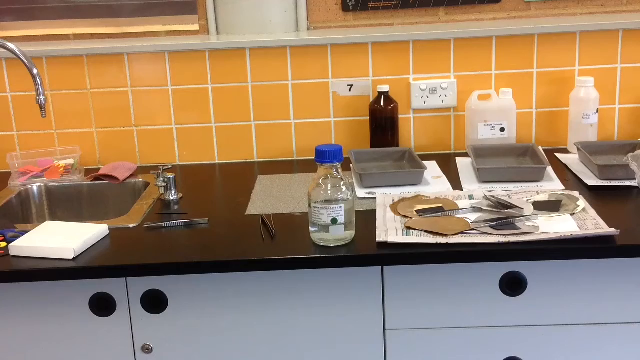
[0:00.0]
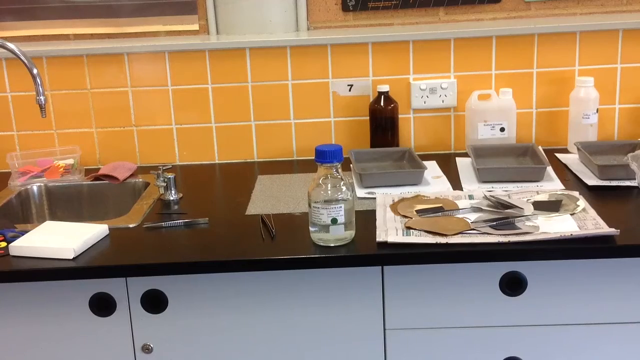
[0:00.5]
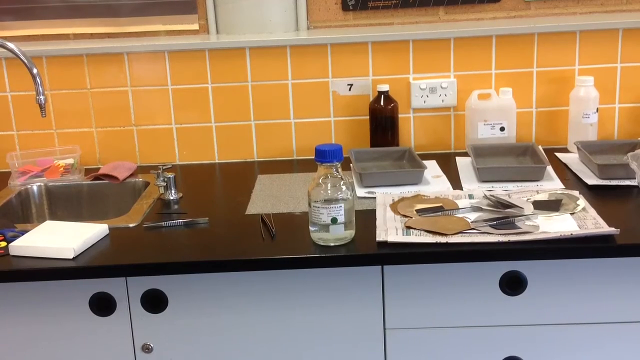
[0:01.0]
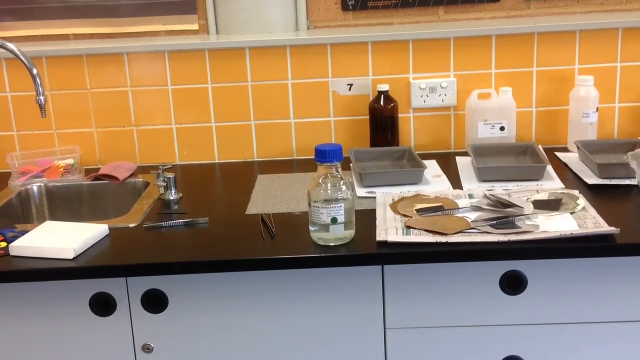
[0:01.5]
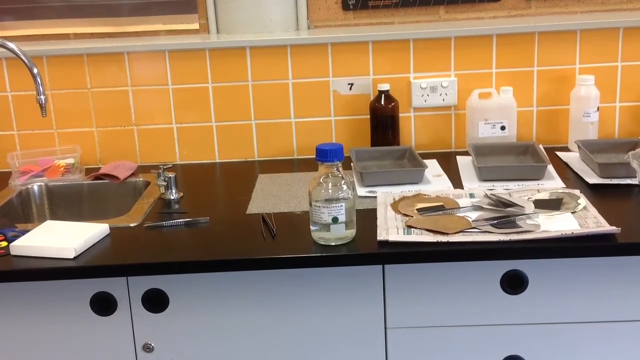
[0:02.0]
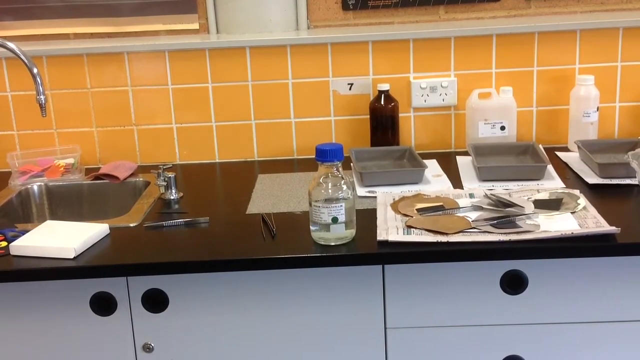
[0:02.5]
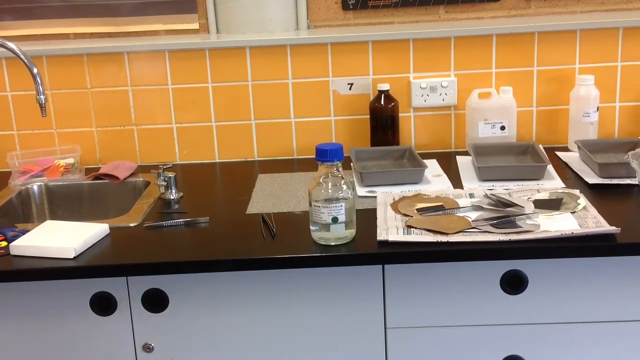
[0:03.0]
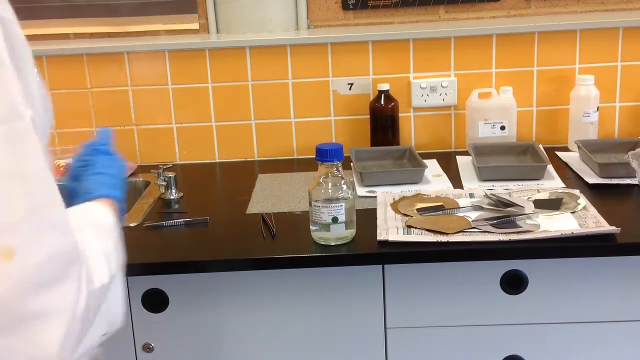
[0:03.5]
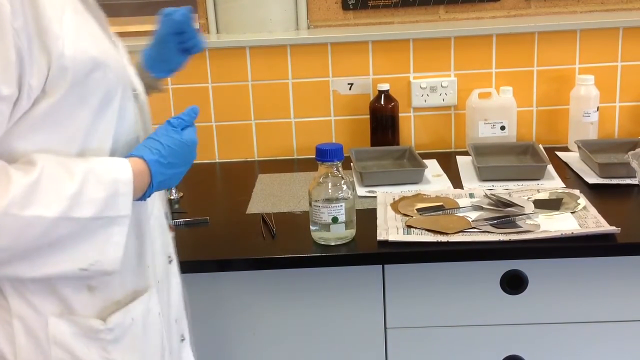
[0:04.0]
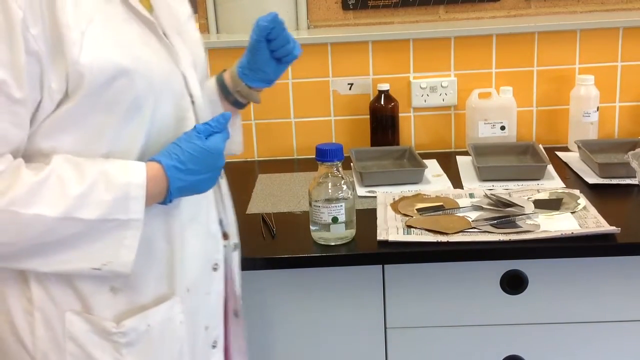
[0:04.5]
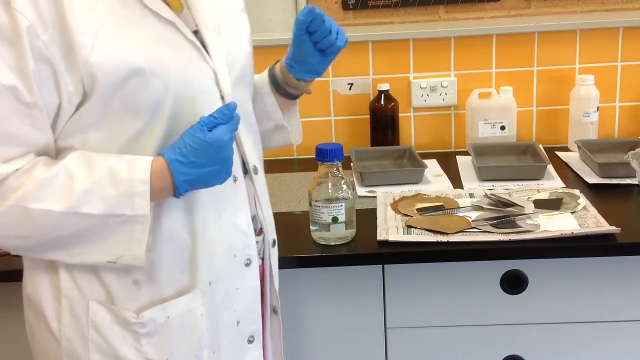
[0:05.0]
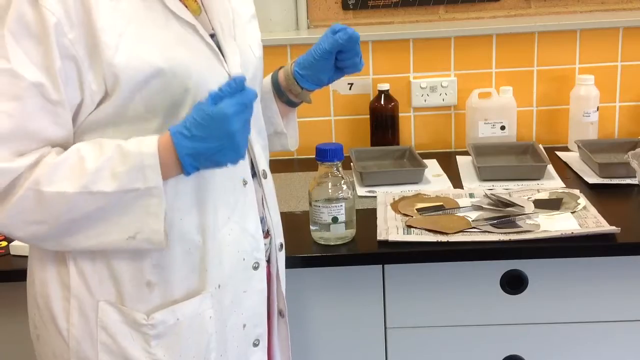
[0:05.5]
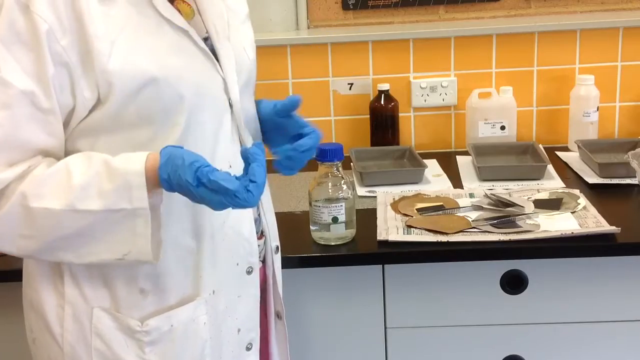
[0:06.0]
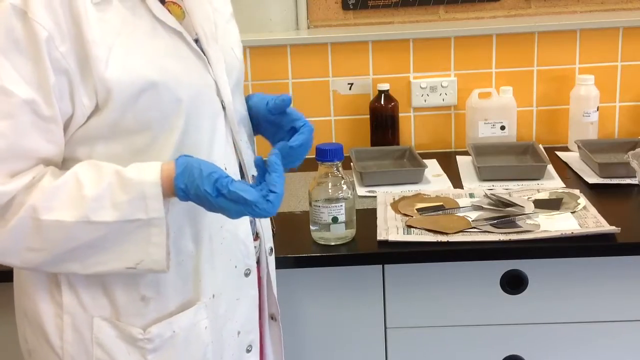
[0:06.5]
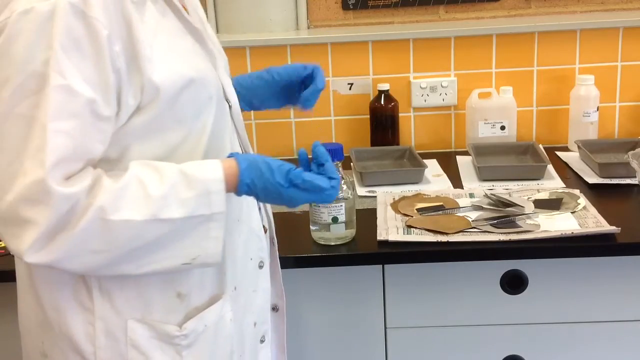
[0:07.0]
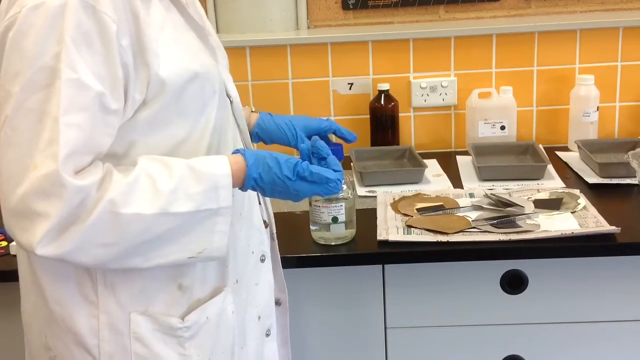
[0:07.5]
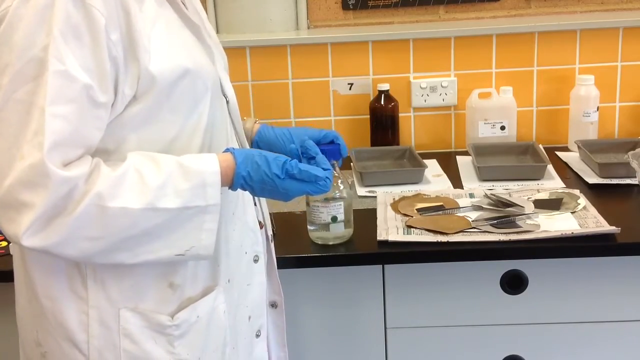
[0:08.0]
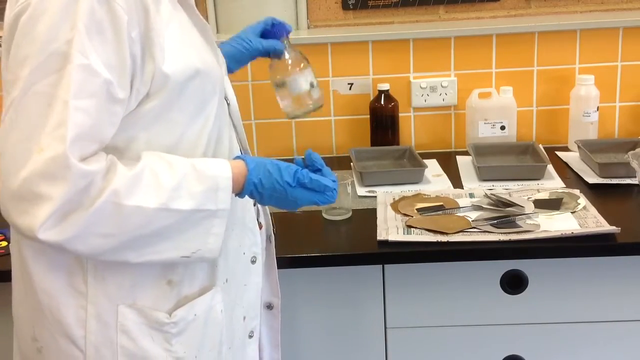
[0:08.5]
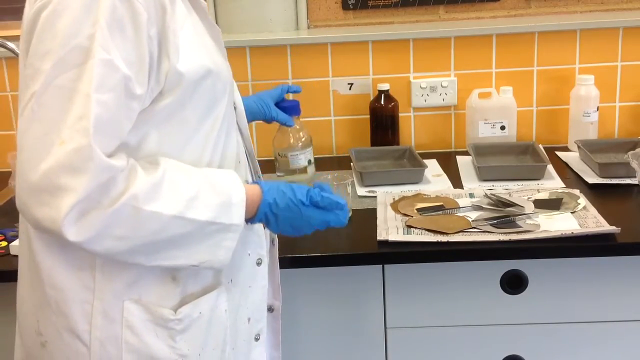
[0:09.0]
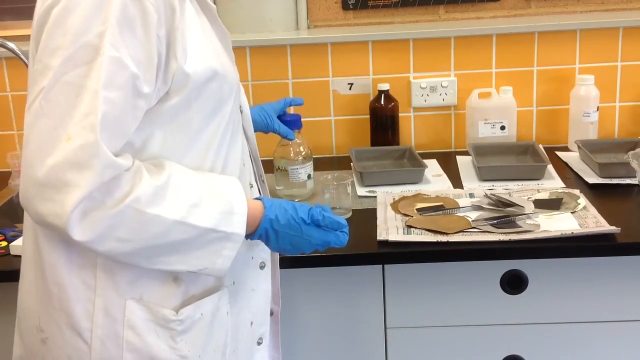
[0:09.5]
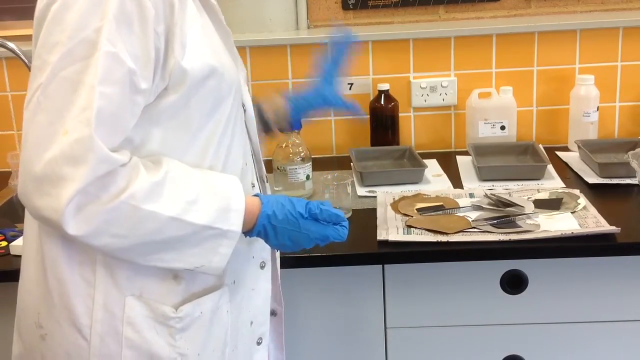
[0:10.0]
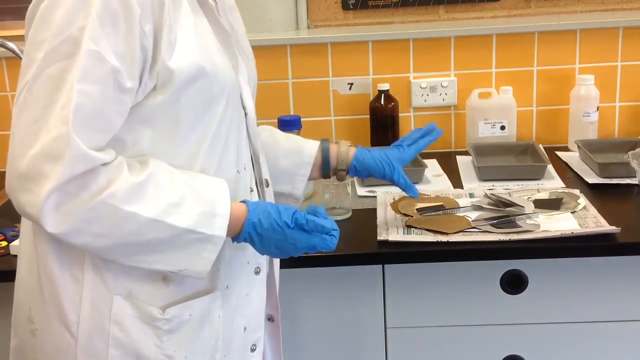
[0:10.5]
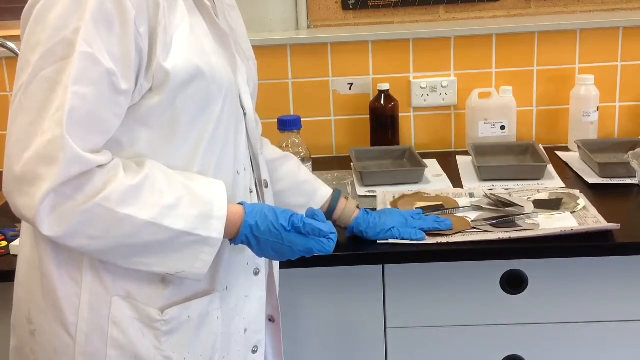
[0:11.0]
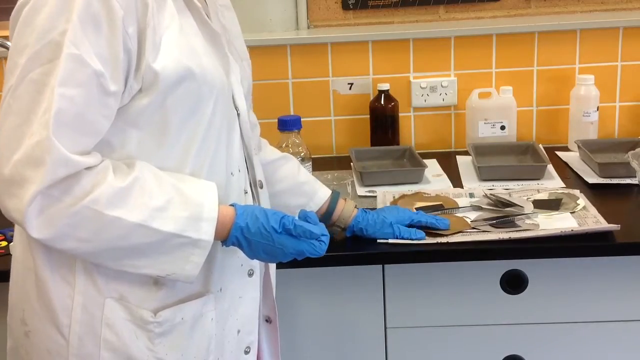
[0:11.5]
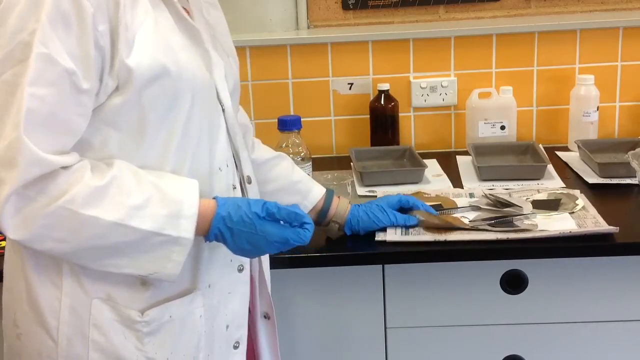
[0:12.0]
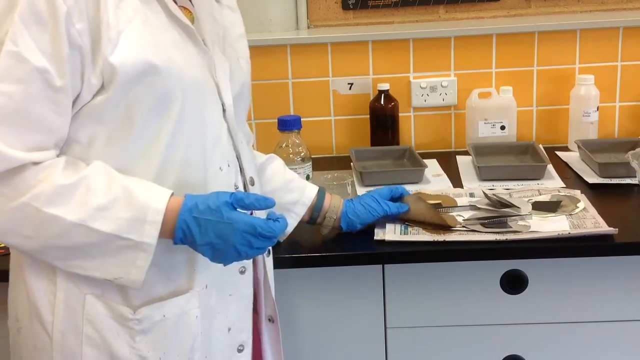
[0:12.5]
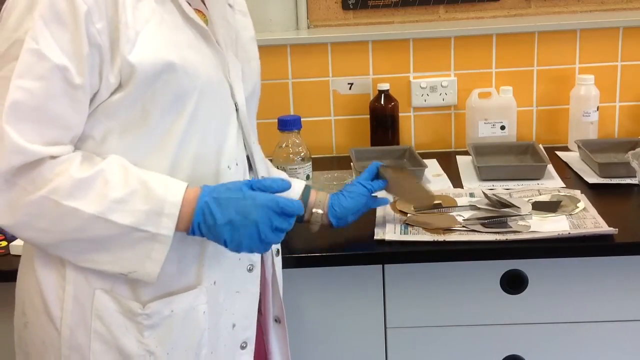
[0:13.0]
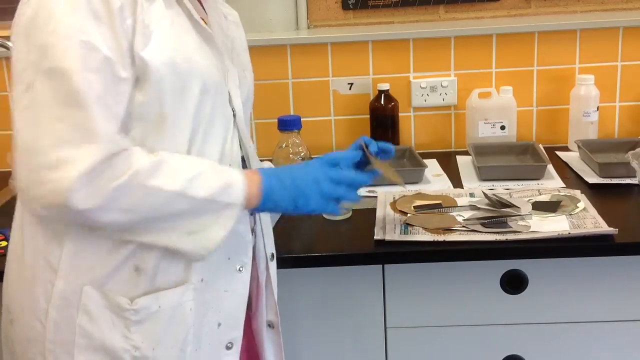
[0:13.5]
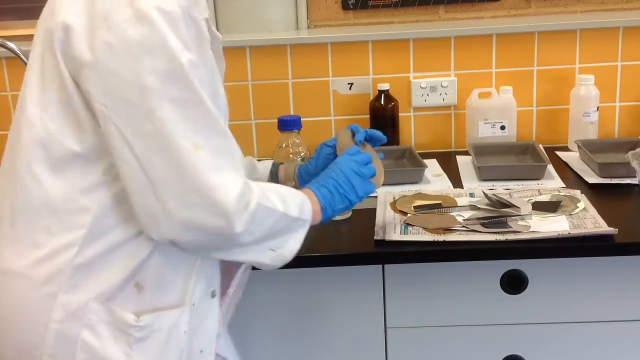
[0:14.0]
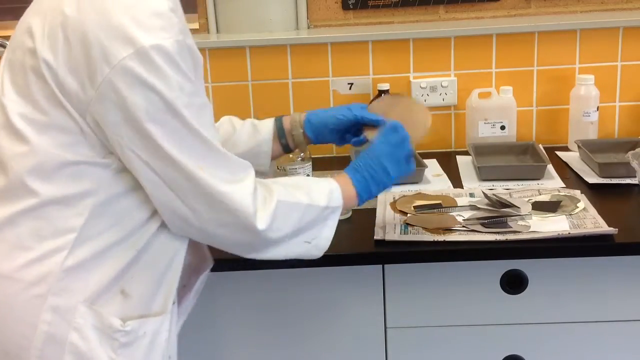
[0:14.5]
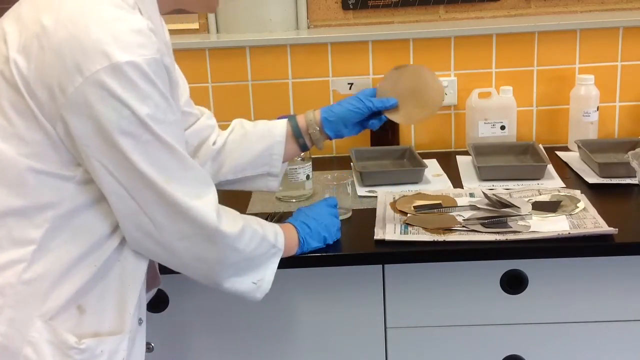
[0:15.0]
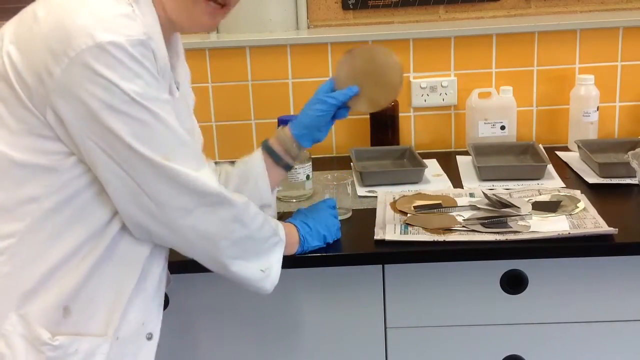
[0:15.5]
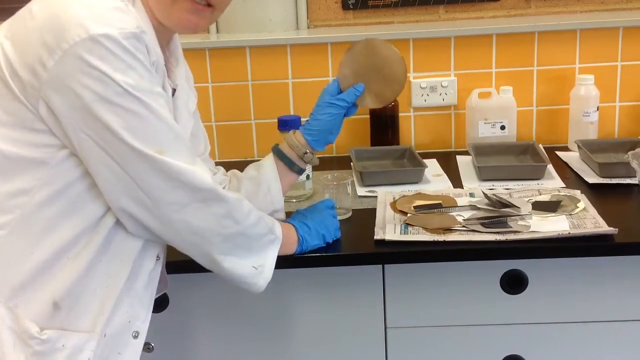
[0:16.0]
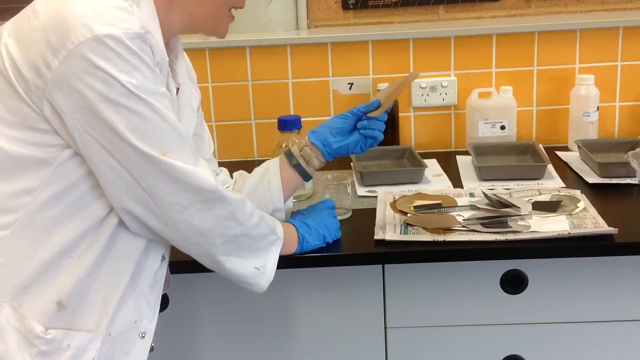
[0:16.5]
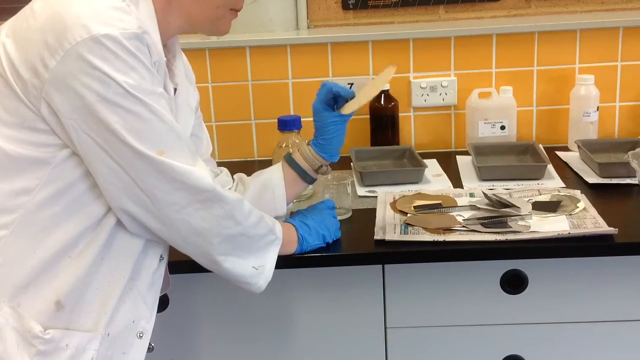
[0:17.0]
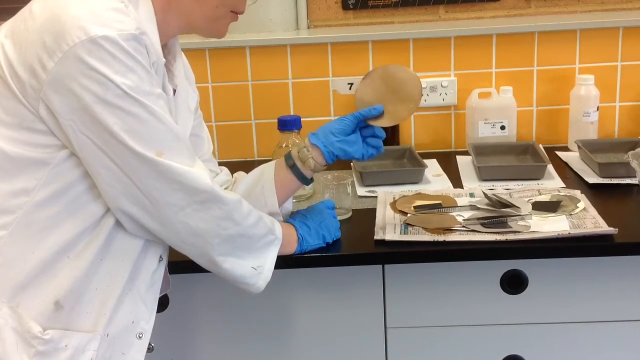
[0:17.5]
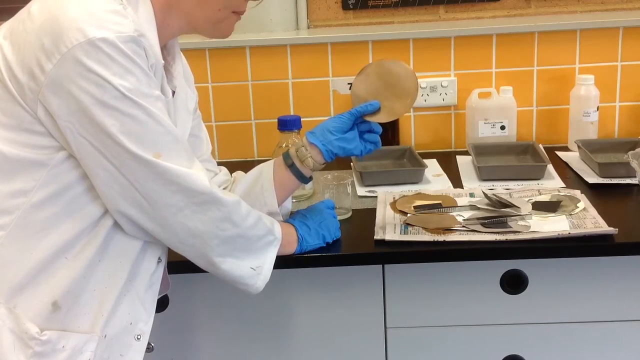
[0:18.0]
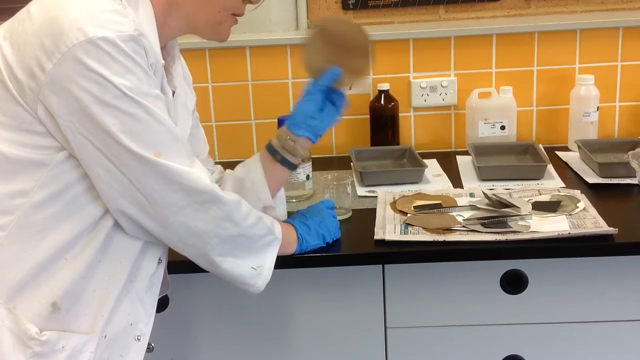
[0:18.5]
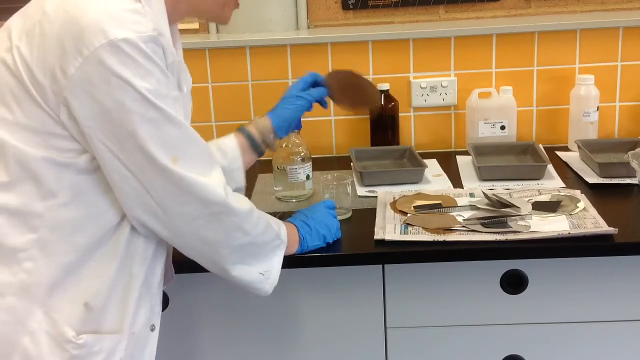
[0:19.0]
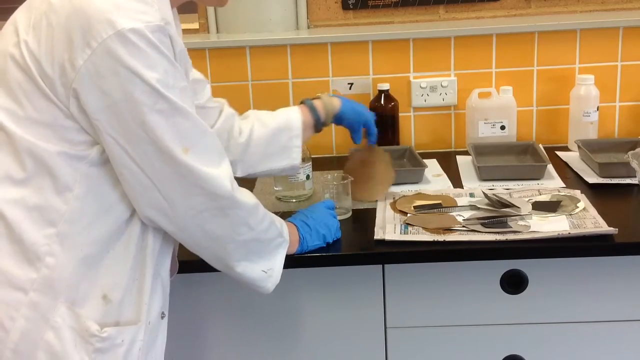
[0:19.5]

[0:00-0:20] The video opens on a countertop with a dark brown top, a silver sink on the left, and two cabinets below it. A person in a white coat and blue gloves walks up and turns to the left. With their left hand they reach down and pick up a bottle of liquid, then place their left hand on some newspaper that has circular cardboard cutouts on it and pick it up. They leave their left hand on the countertop, rest their right hand on the countertop, and begin showing the piece of cardboard while talking about it. On the countertop, a brown bottle is next to an orange tile wall; to its right is a plastic jug, and to the right of that is a white plastic bottle. There appear to be three gray cake pans sitting on white square plates, behind and in front of the bottles.